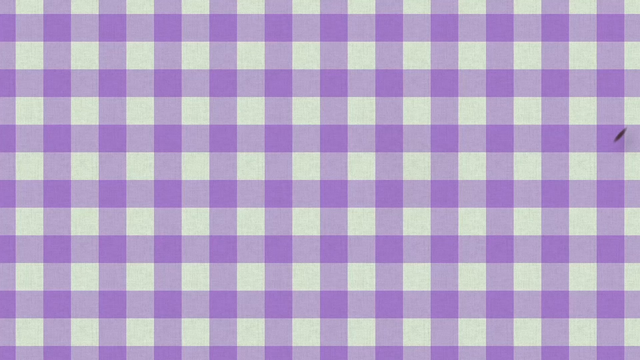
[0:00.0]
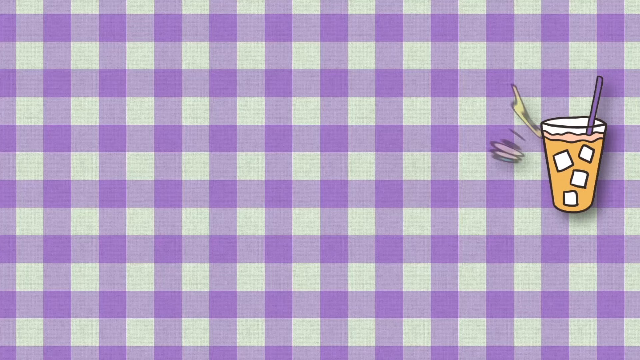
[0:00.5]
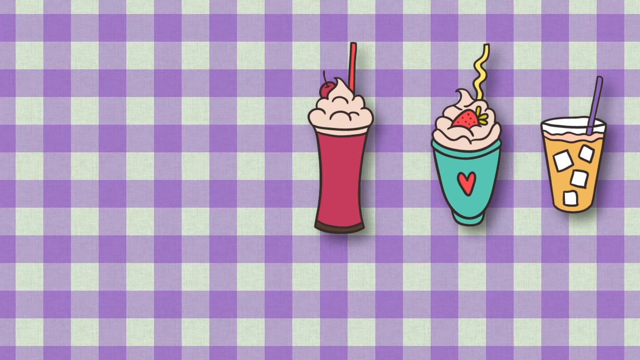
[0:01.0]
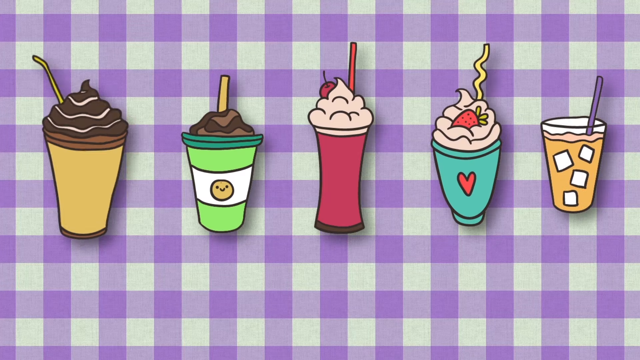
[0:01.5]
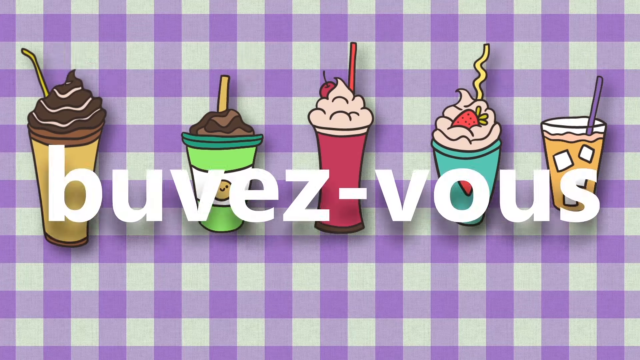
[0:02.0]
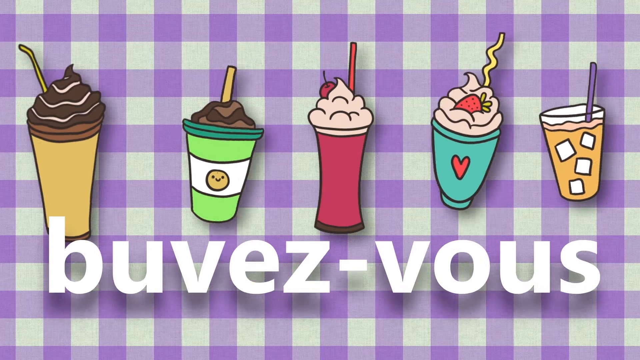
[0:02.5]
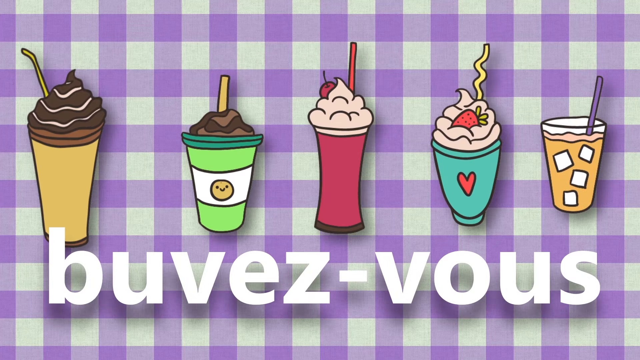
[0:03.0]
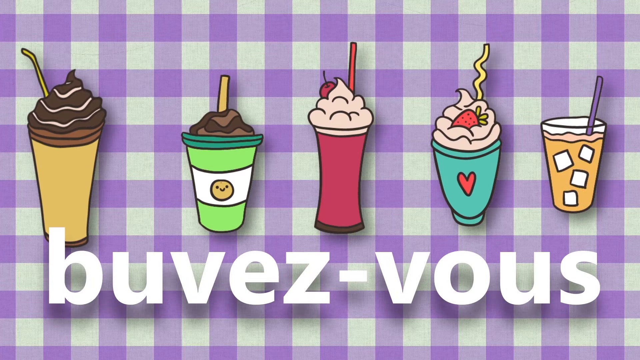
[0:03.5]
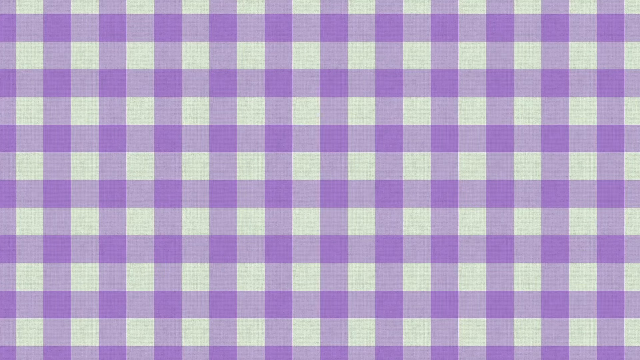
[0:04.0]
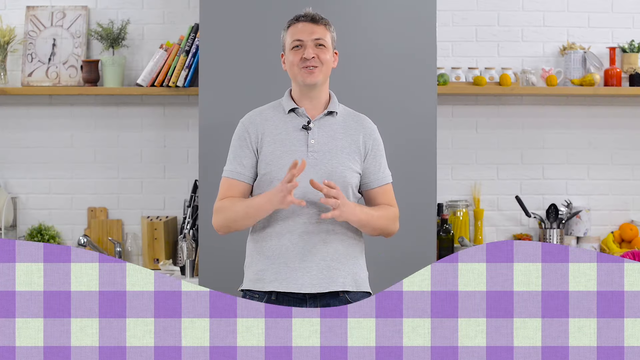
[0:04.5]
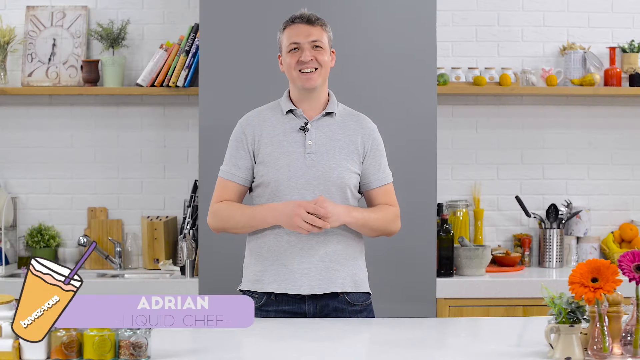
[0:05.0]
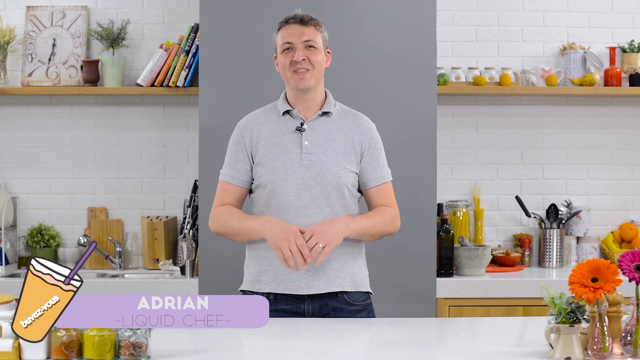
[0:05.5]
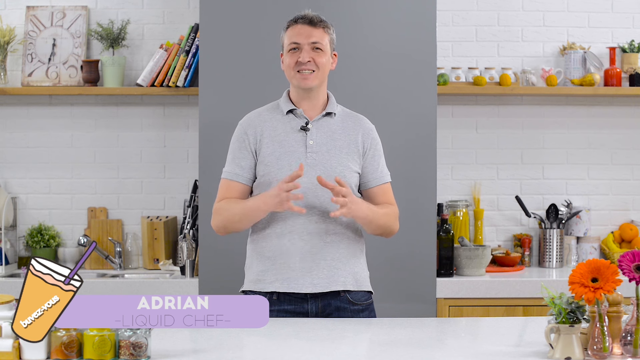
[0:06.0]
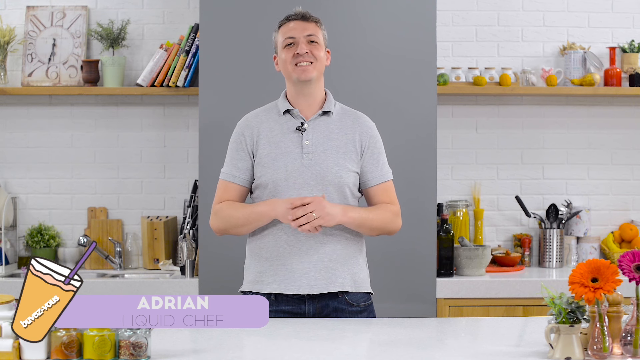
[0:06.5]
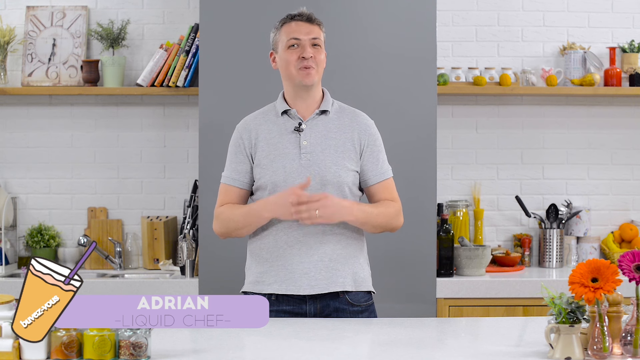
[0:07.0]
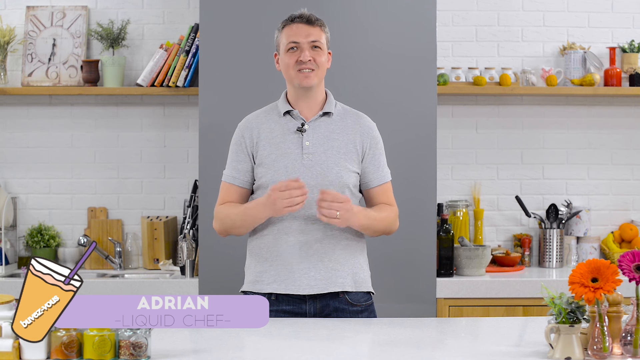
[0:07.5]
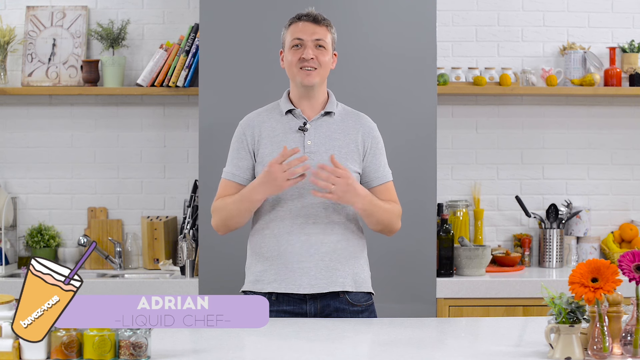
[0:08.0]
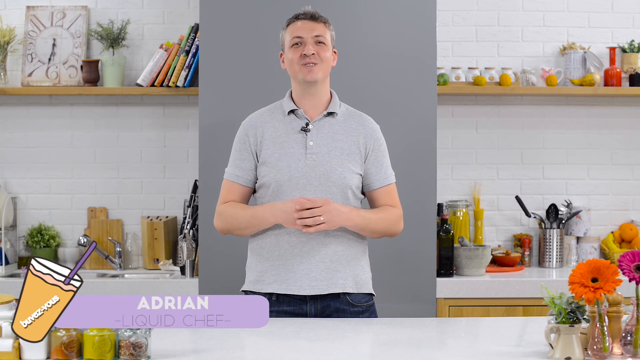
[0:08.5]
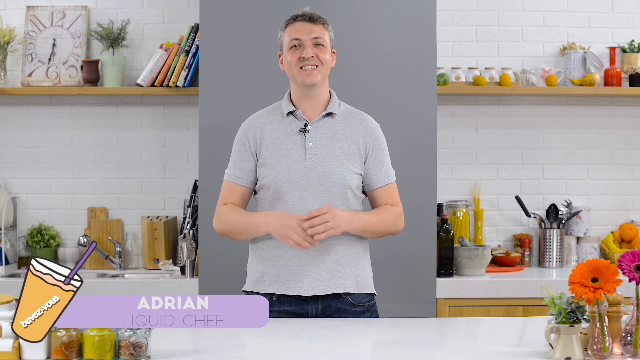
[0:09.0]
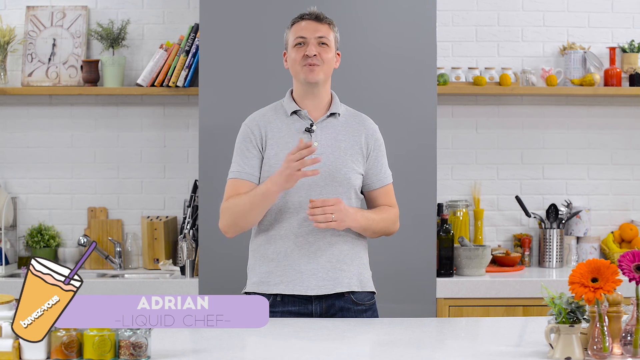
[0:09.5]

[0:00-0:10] The video opens on a lavender and white gingham background, and five colorful cartoon drinks appear across the screen one by one: a brown drink with what look like ice cubes in it, a drink that might be some sort of milkshake, another drink that might be a milkshake, and two drinks that look like they might be some kind of coffee drink. The text "buvez-vous" is overlaid on top. The image then cuts to a man who looks maybe in his late 30s, with sort of short gray hair and a gray shirt. He is standing in what is presumably a kitchen, with some kitchen utensils and what look like cookbooks in the background. He is smiling and talking and looks very friendly. The name "Adrian" appears at the bottom of the screen, apparently his name.